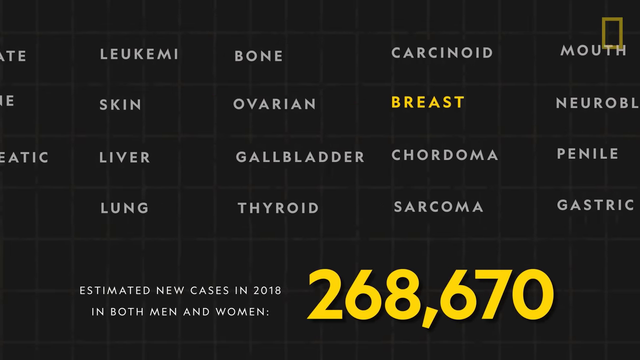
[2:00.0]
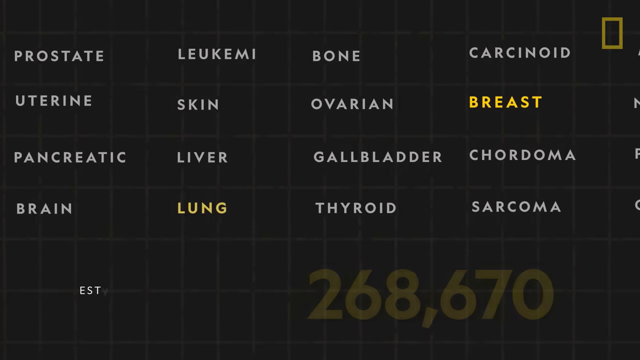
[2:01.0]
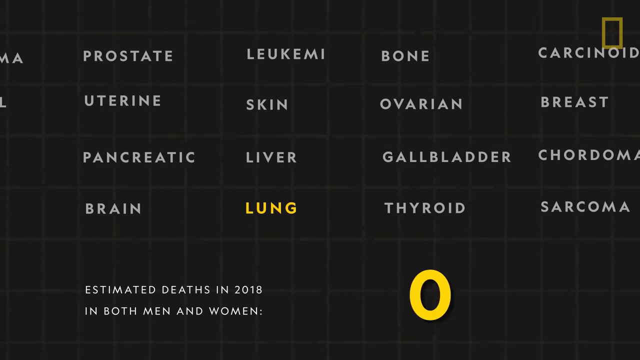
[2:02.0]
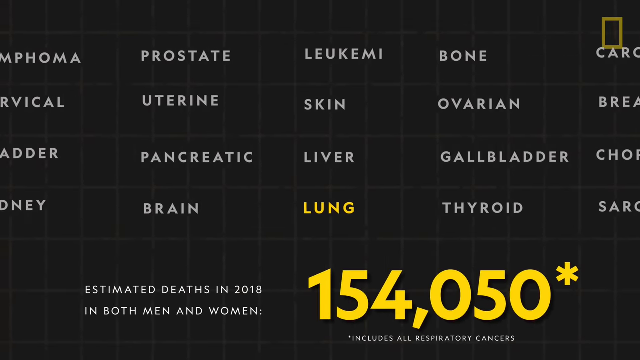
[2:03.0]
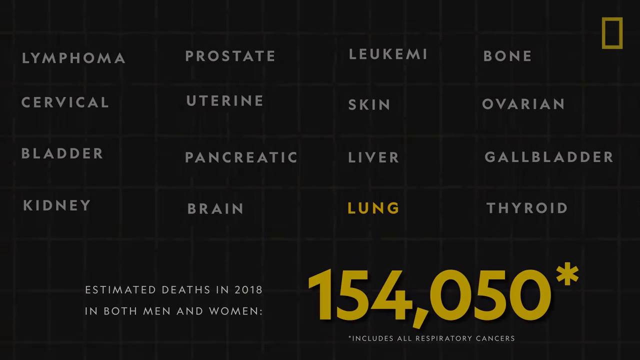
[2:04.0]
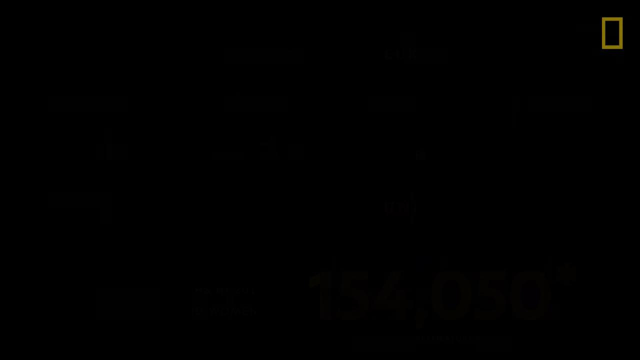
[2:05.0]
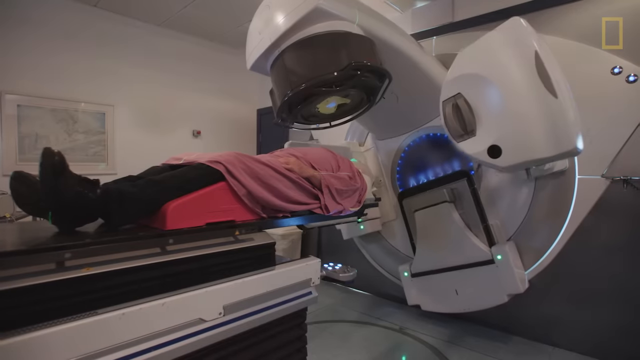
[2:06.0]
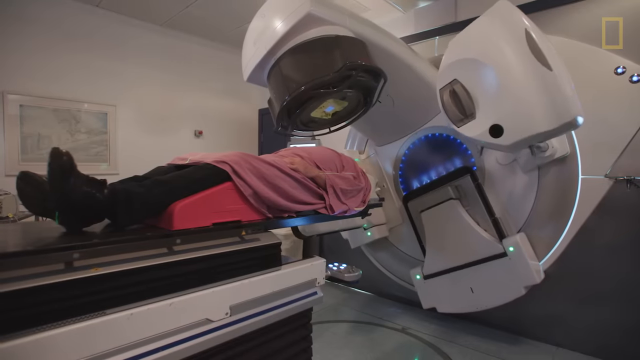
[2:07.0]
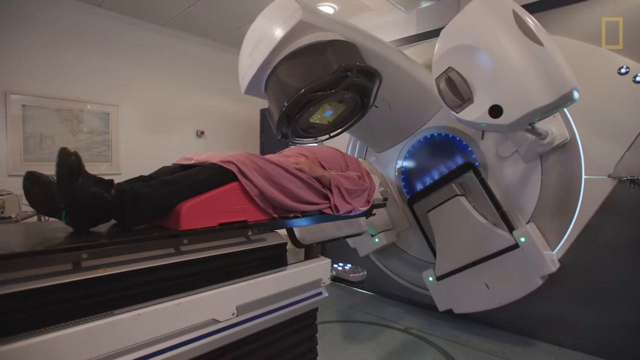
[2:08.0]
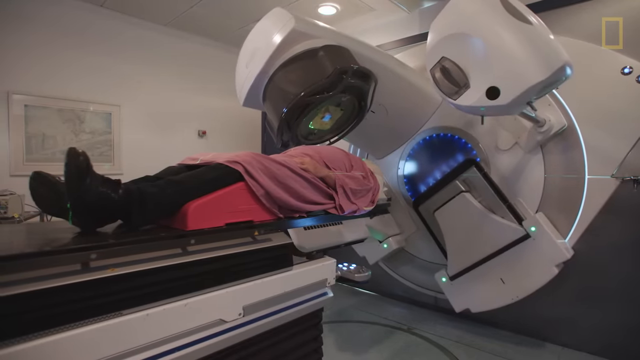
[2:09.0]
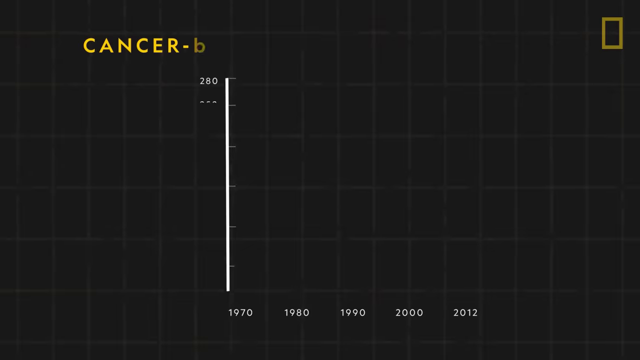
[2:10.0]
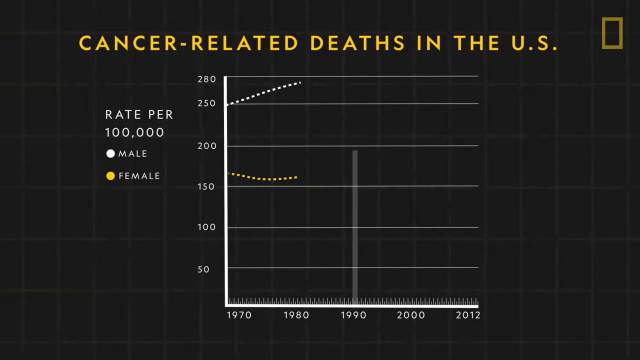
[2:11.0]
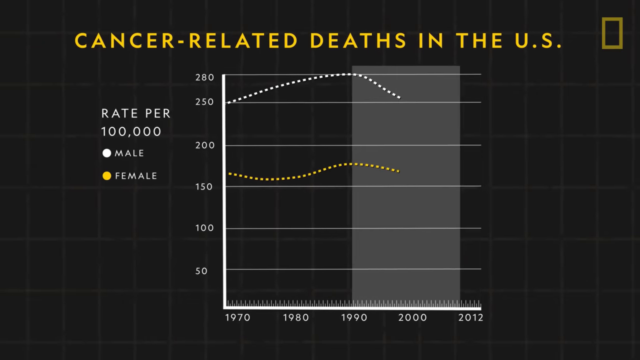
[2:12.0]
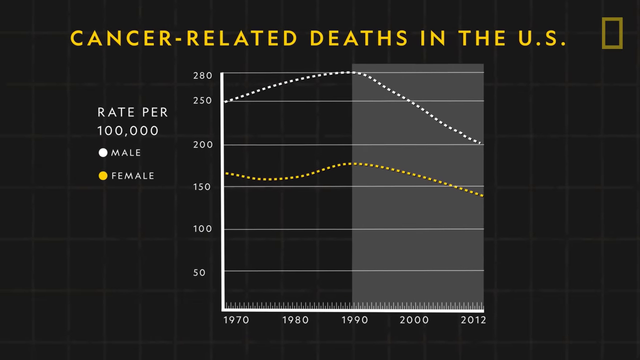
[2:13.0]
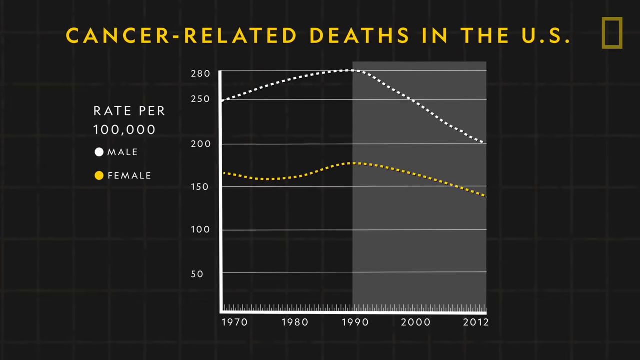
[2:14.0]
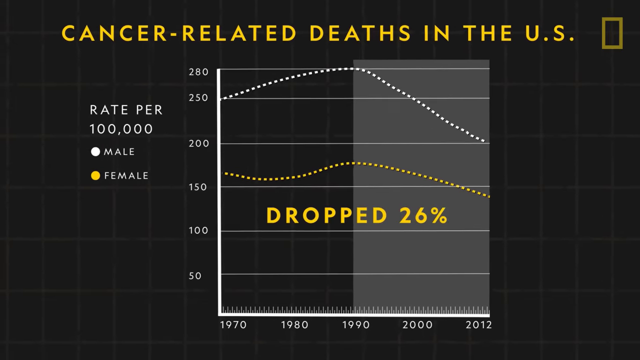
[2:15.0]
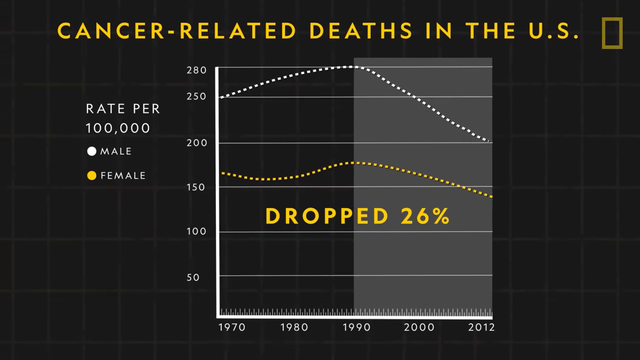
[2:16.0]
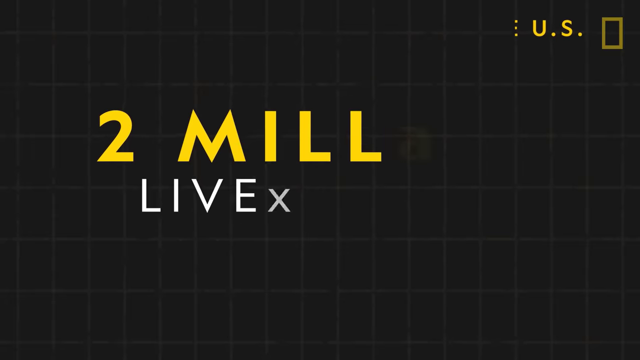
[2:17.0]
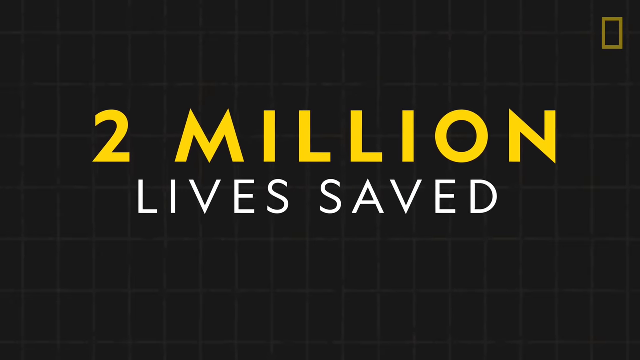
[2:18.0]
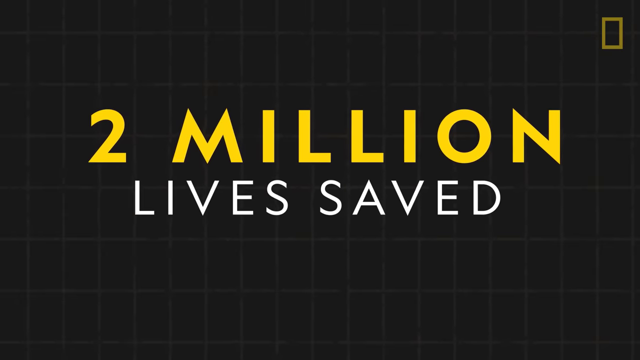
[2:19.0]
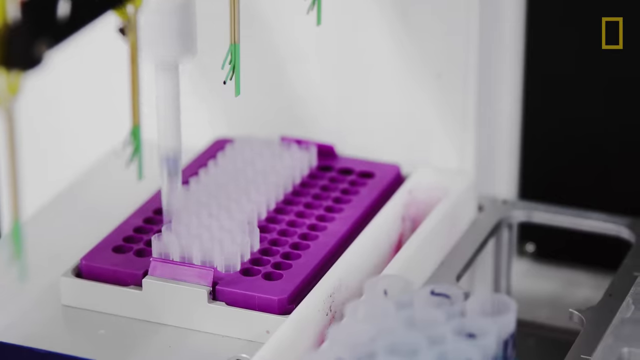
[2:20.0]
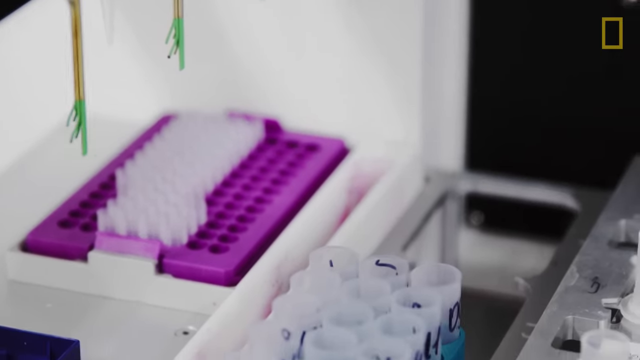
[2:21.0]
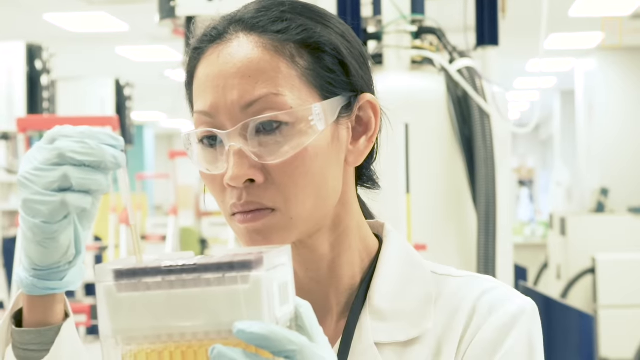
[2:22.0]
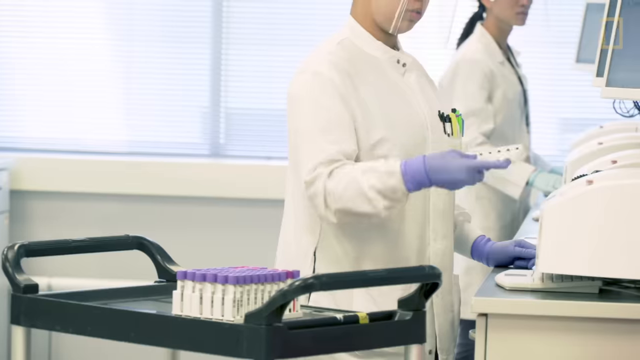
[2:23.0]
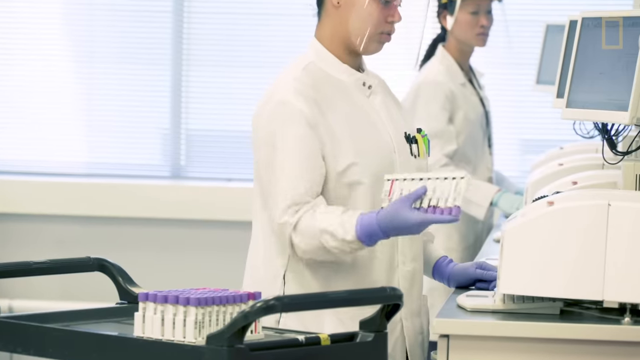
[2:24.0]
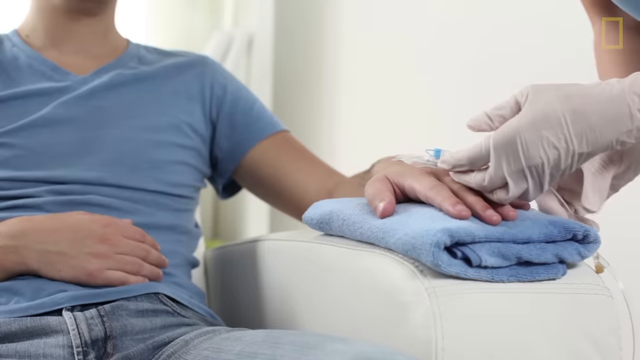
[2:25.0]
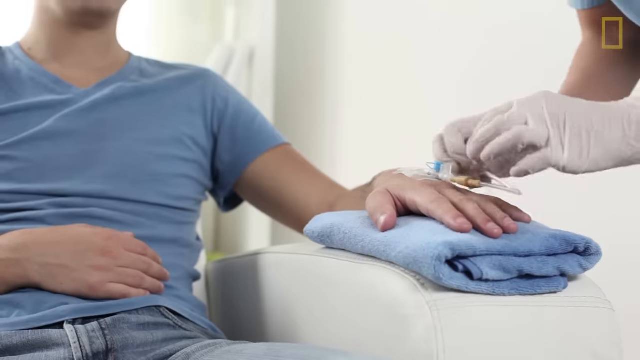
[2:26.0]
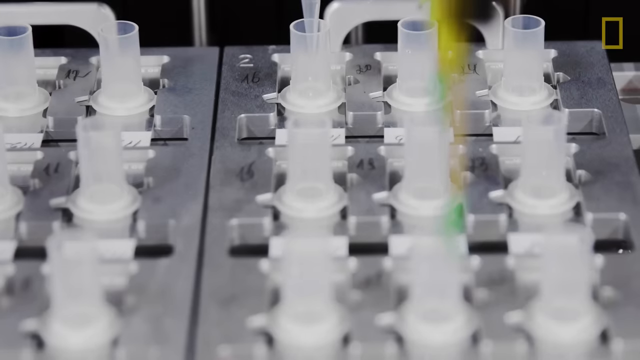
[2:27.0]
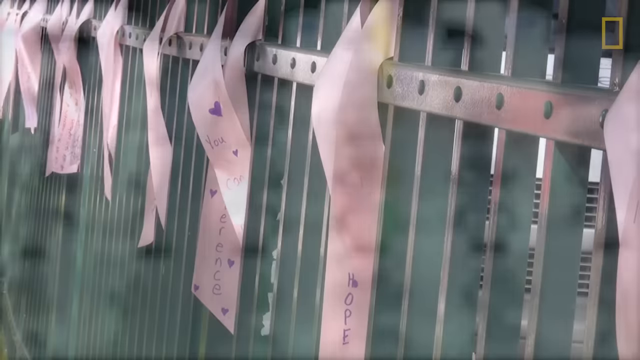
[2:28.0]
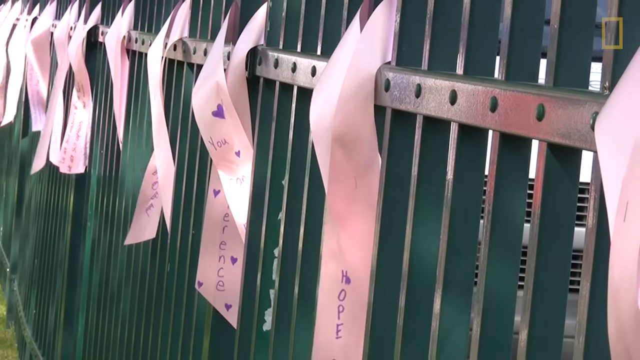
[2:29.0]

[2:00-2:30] The columns of words scan across the screen, and the number at the bottom shifts to "154,050" with an asterisk next to it. Above, the word "lung" is highlighted, so the number perhaps reflects lung cancers. The screen shifts to a person on a table being moved toward the right into a piece of lab equipment, either a CAT scan or an MRI scan, part of which revolves and scans the person. Next is a line chart titled "cancer-related deaths in the U.S.," distinguishing male and female. Both lines rise on the left side, reach a peak, and then lower toward the right, and the text underneath reads "dropped 26 percent." The next screen reads "two million lives saved." The scene then moves inside a laboratory, where lab technicians work at different types of equipment.